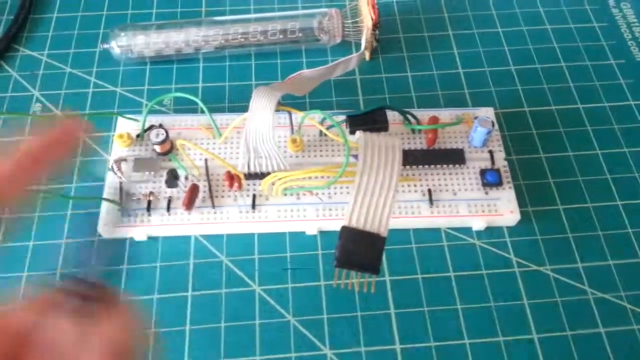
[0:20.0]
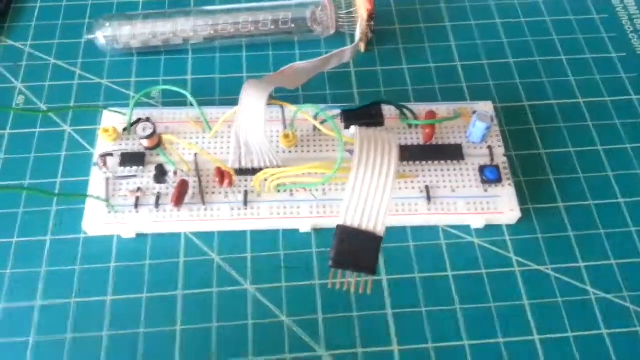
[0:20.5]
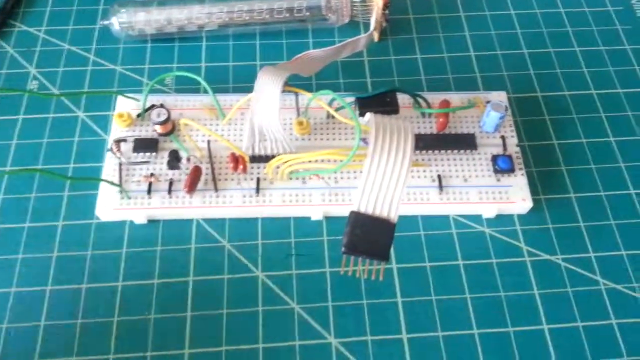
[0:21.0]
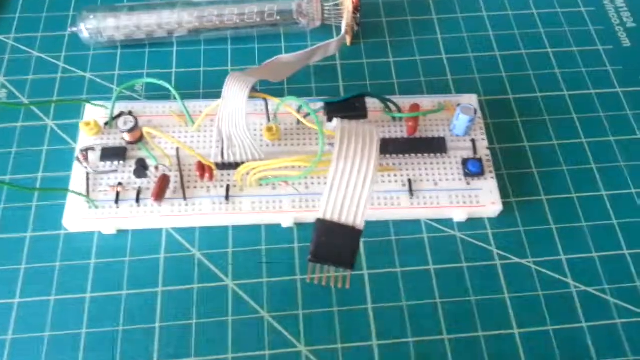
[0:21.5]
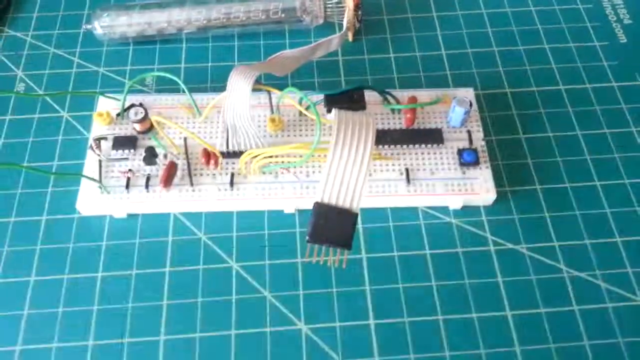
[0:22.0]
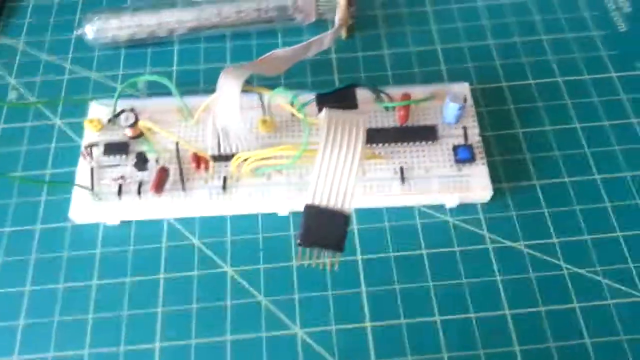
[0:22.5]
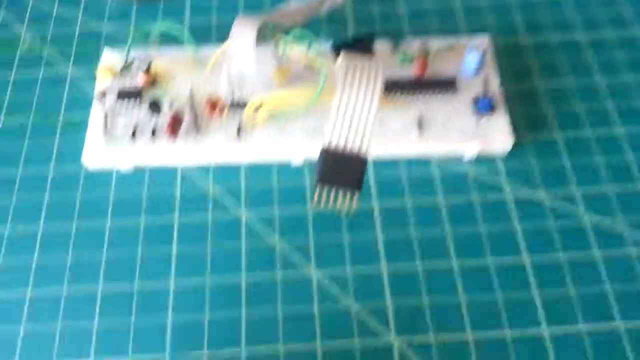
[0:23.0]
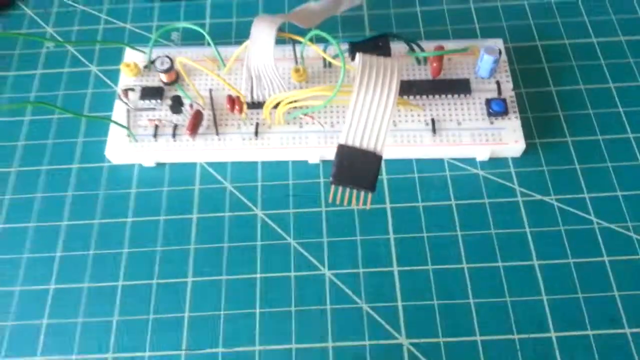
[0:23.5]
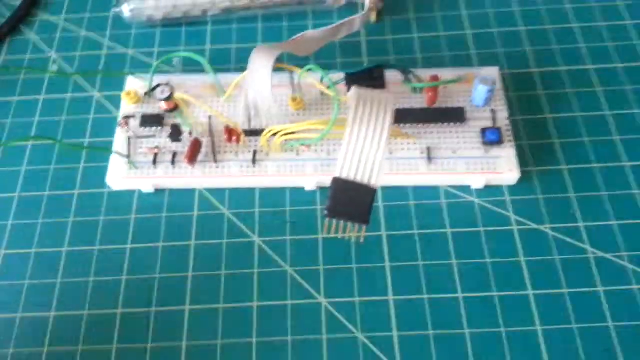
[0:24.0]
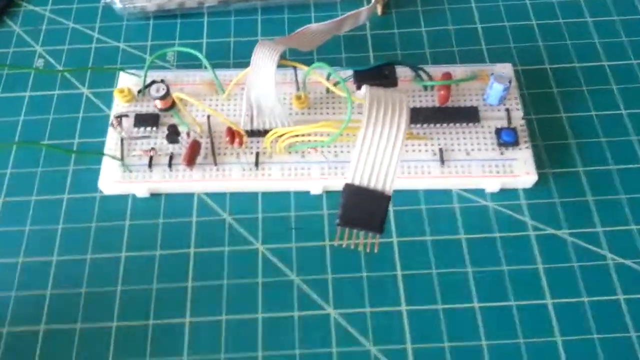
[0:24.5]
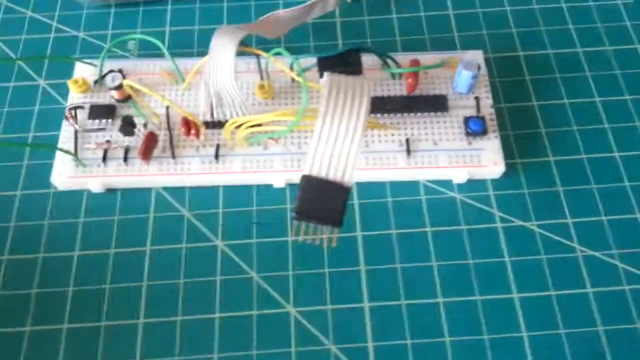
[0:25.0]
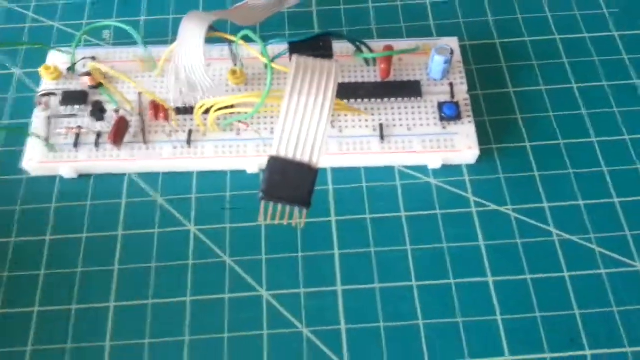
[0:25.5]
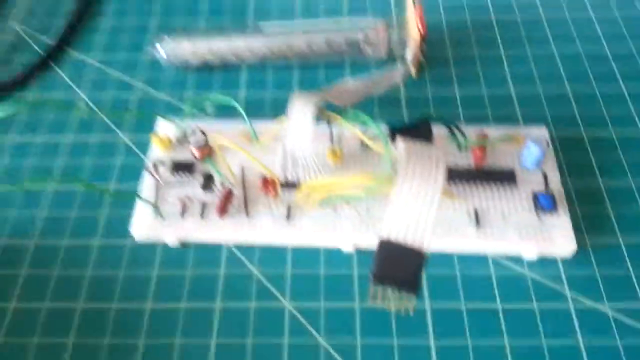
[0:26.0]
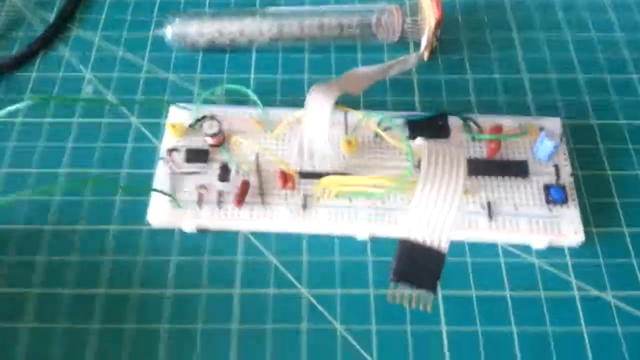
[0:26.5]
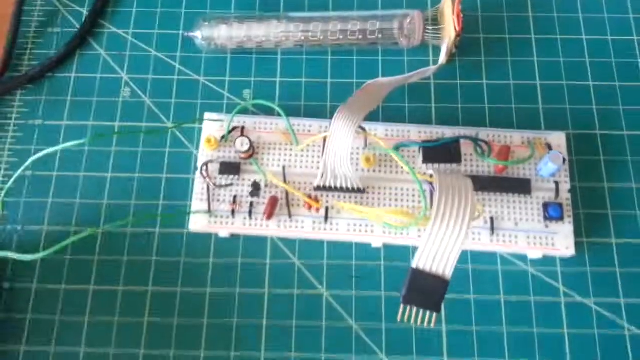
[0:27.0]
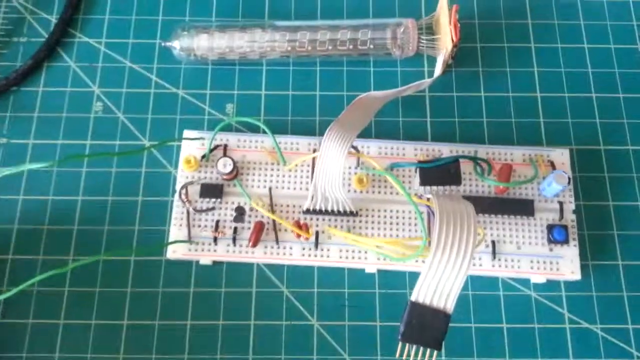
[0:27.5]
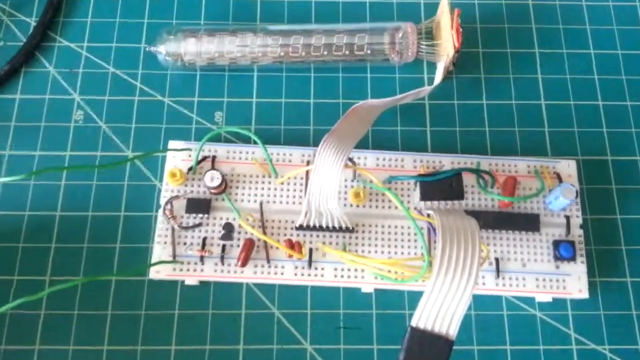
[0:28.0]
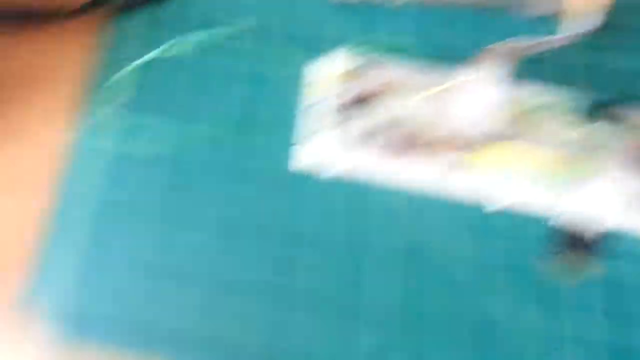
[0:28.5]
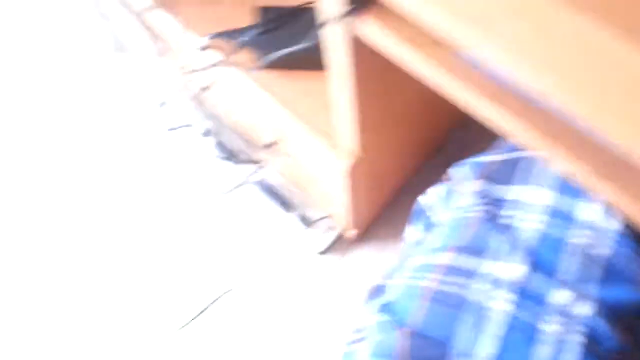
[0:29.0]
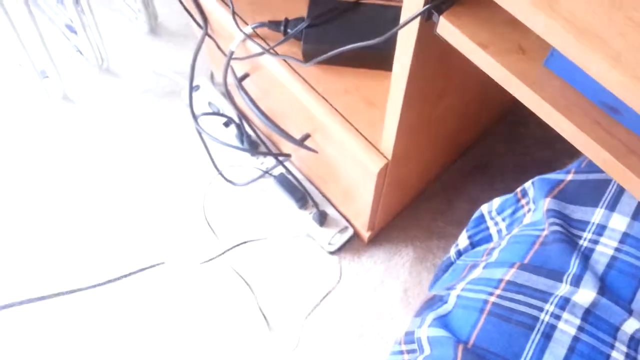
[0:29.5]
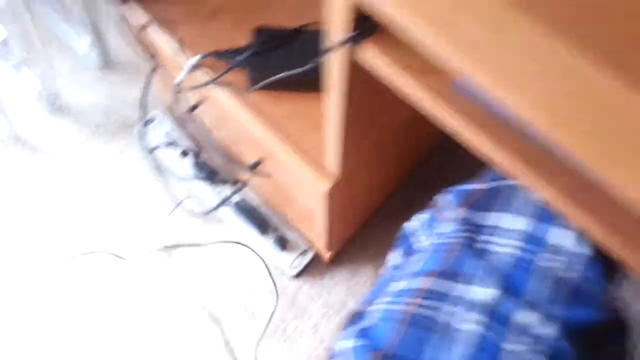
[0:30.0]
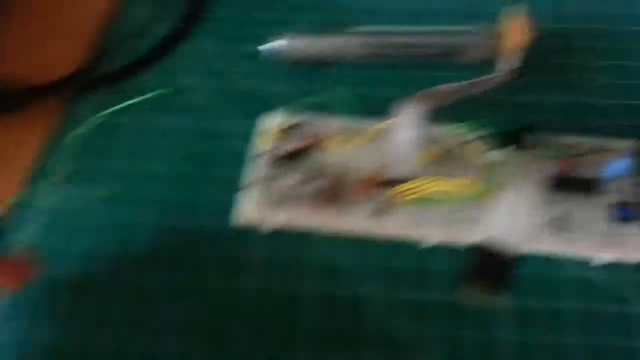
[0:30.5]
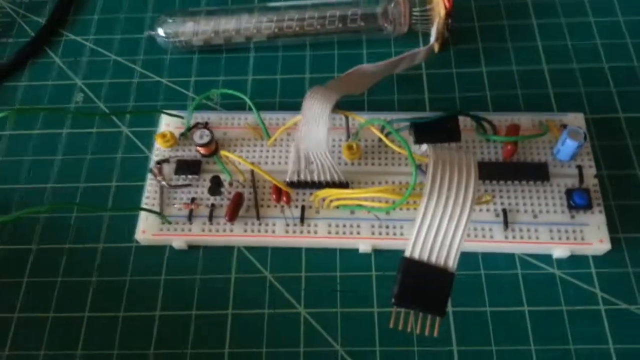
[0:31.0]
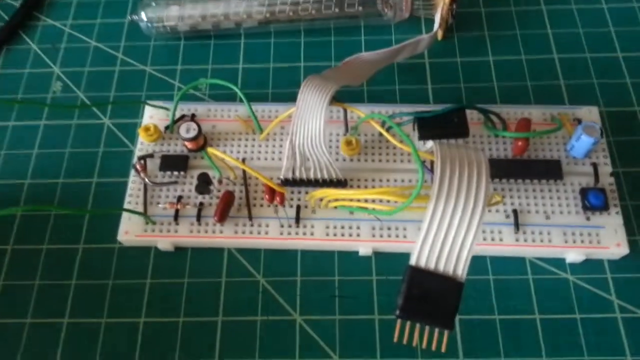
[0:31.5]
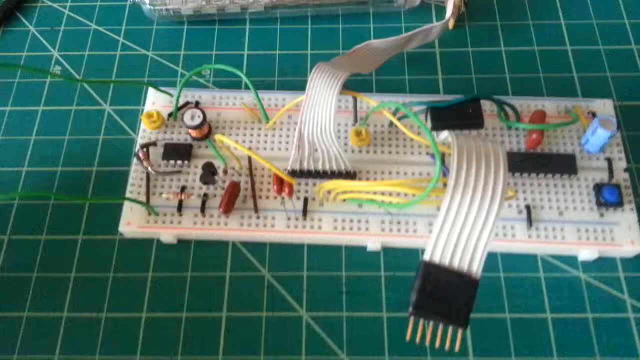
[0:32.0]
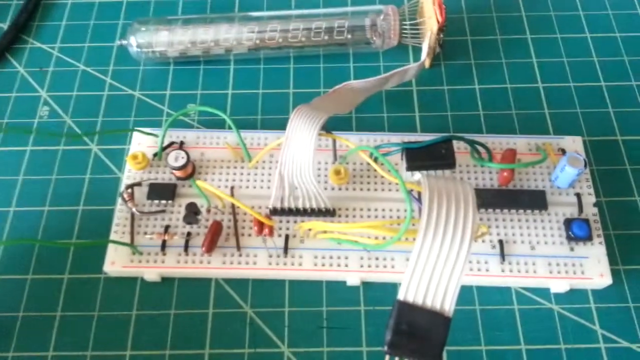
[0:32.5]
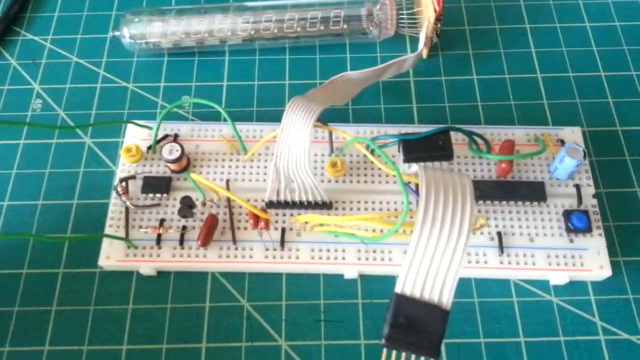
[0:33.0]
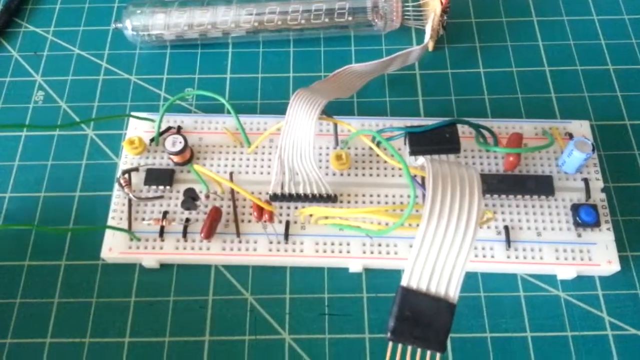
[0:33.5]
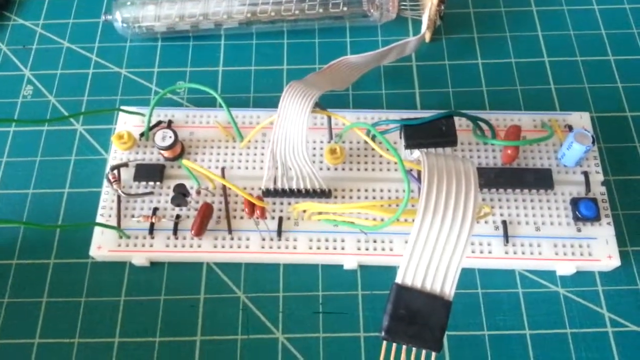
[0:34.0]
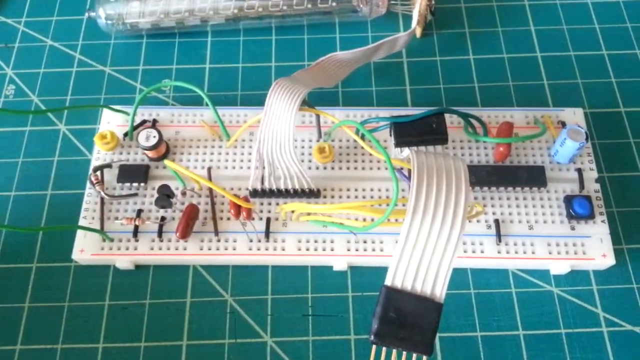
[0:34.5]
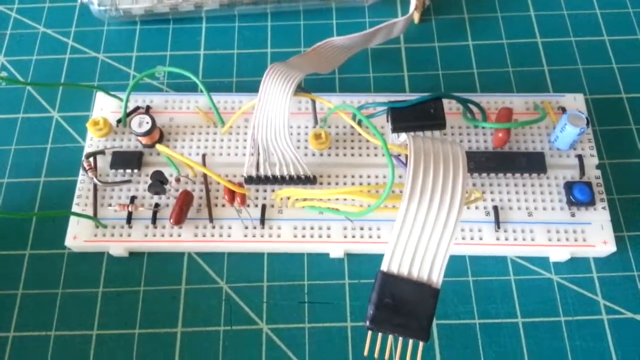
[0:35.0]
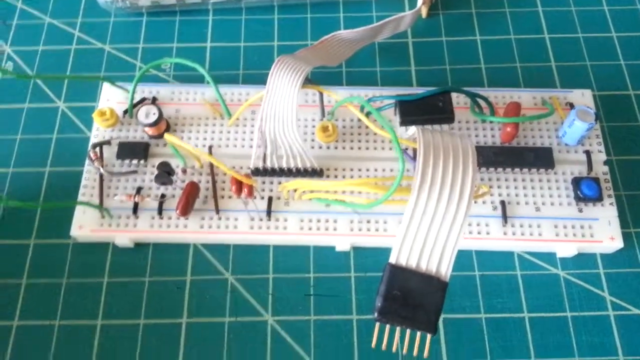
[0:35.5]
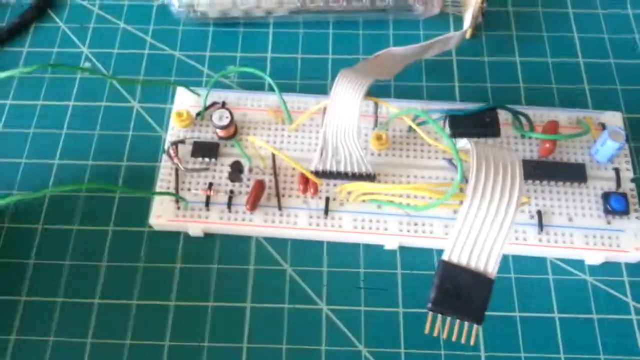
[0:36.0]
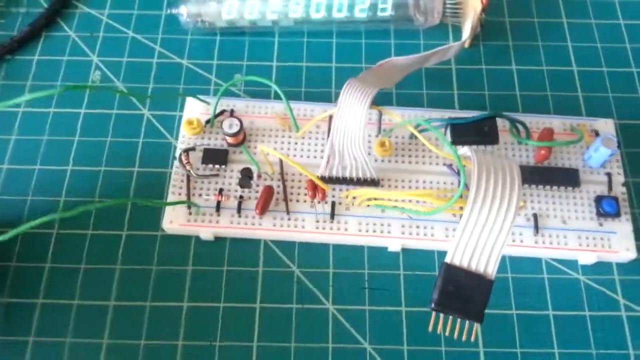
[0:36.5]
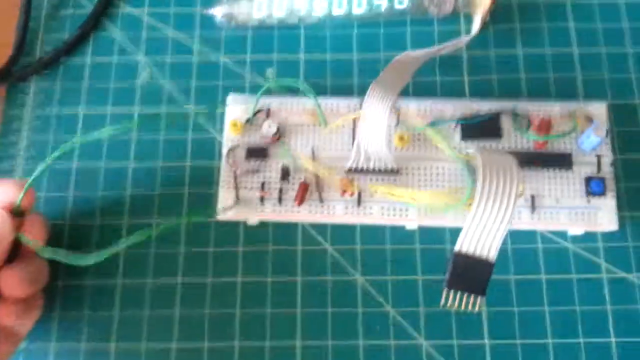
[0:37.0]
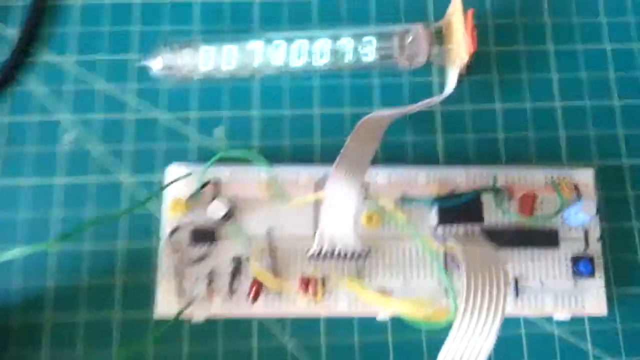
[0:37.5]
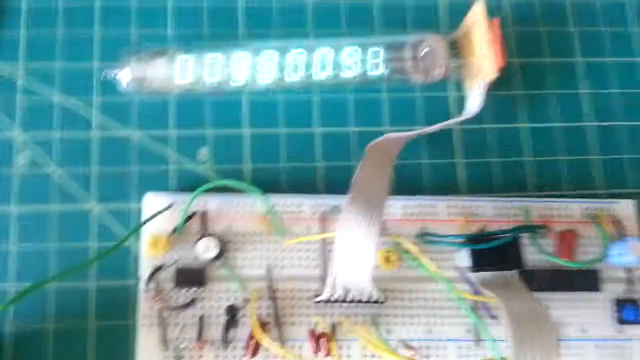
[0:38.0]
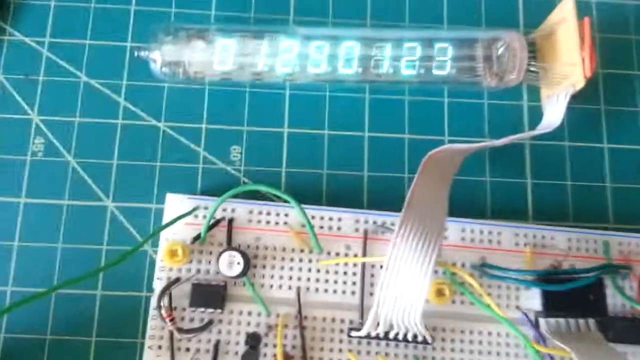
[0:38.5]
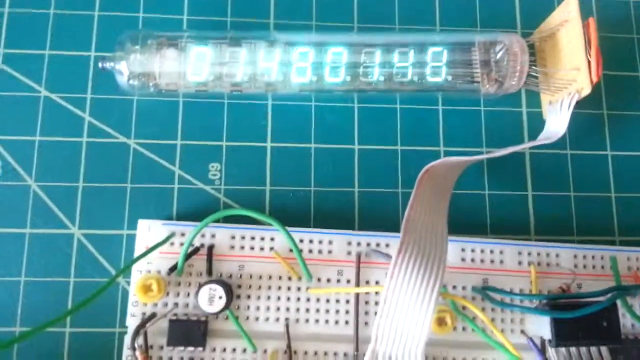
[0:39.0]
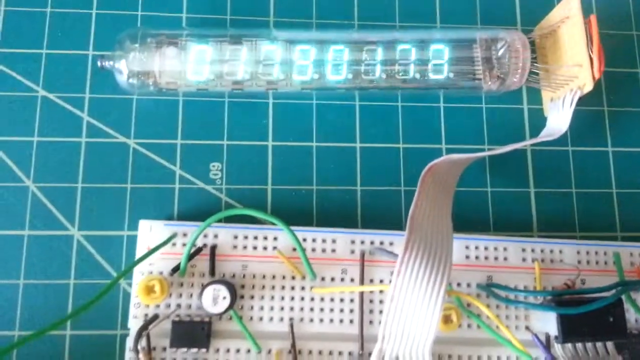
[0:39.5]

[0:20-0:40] The same chip and configuration remain in view. The user apparently gives electrical current to the cable to turn on the Arduino, which lights up the carrot-like object: a long glass tube, one tip full of cables with a chip on top, connected to the Arduino through a thick white cable like those seen on graphics cards of old computers. Inside the tube is a row of LEDs that can show numbers of up to 9 digits. Once the current is on, the display shows a number that fluctuates between values such as 16.6, 11 and 58, quantities that are not very large.